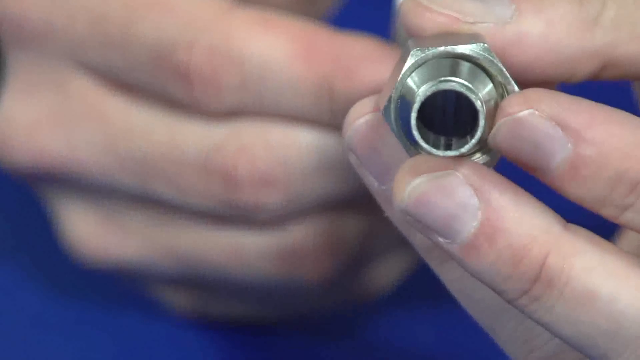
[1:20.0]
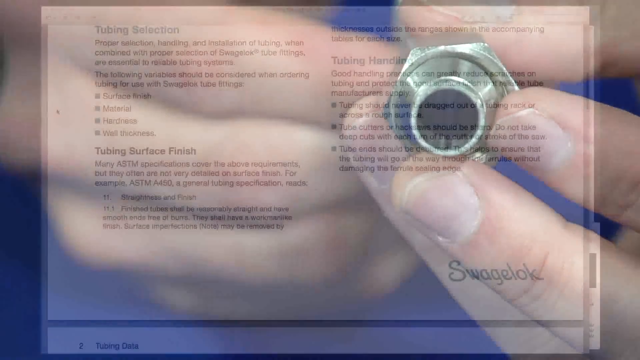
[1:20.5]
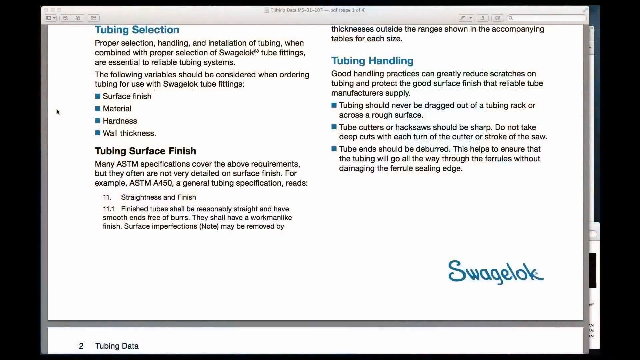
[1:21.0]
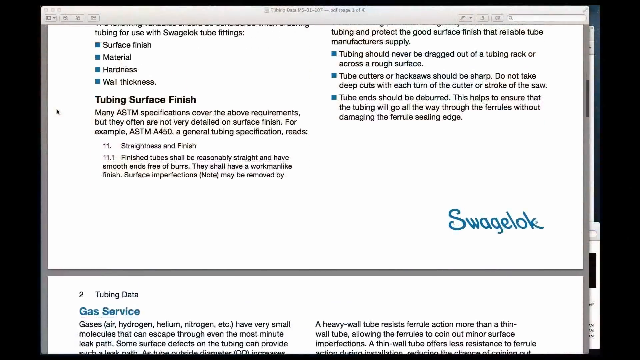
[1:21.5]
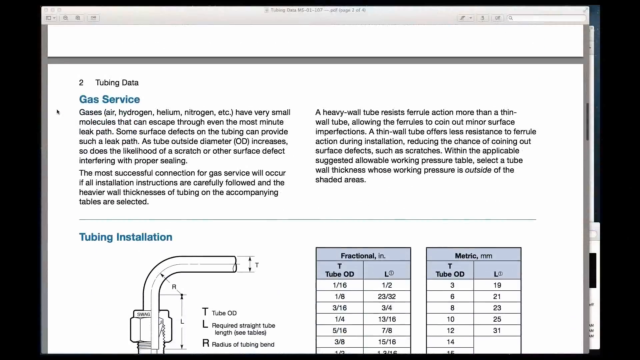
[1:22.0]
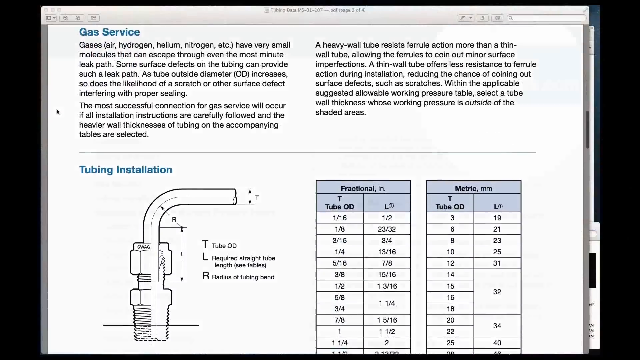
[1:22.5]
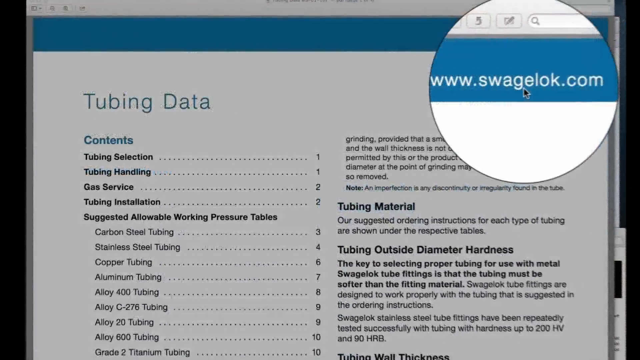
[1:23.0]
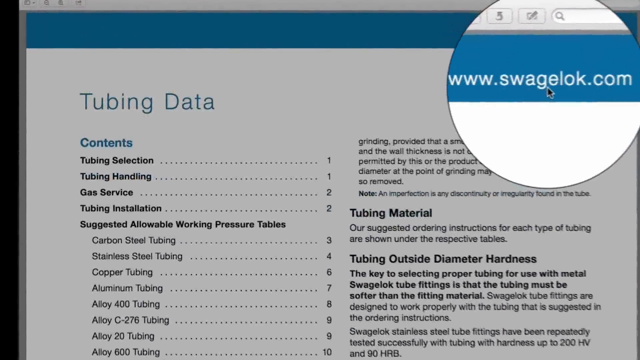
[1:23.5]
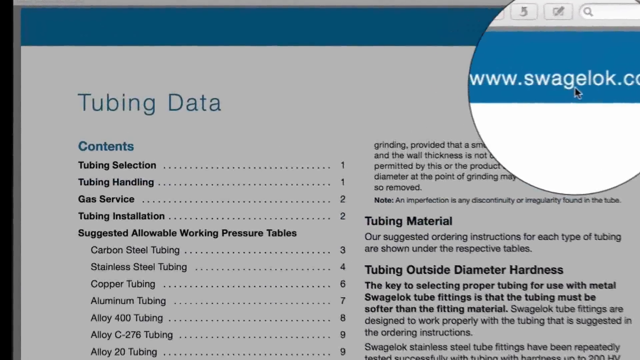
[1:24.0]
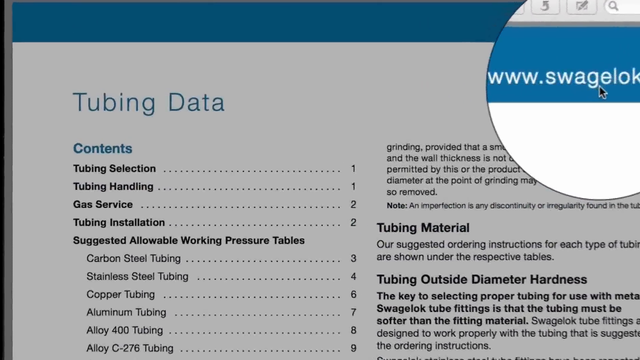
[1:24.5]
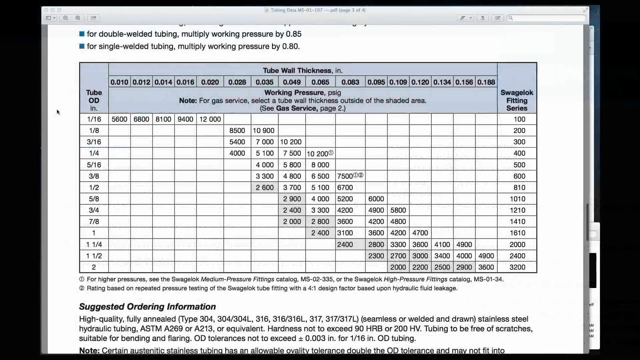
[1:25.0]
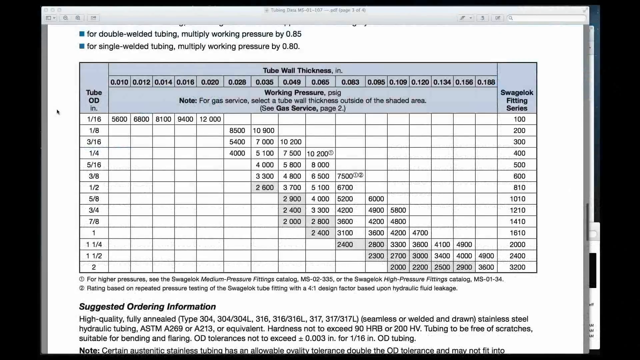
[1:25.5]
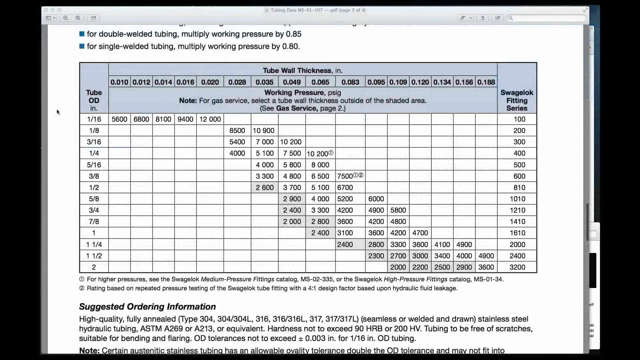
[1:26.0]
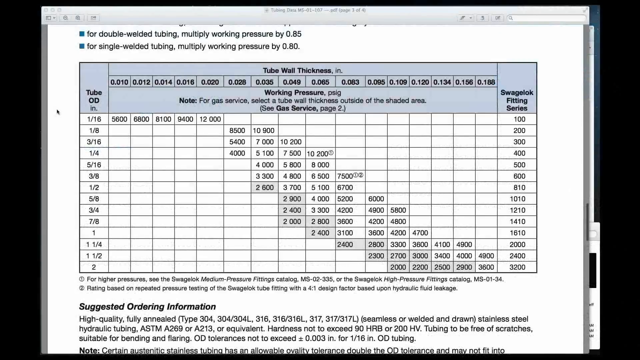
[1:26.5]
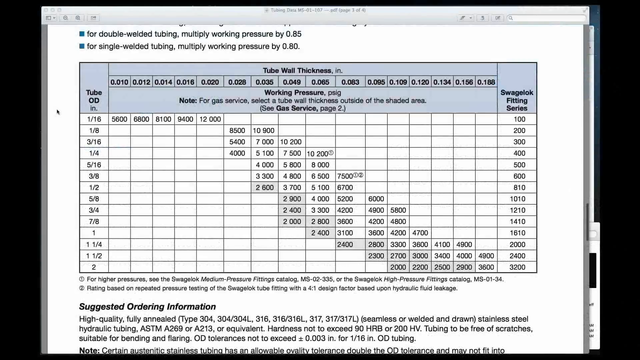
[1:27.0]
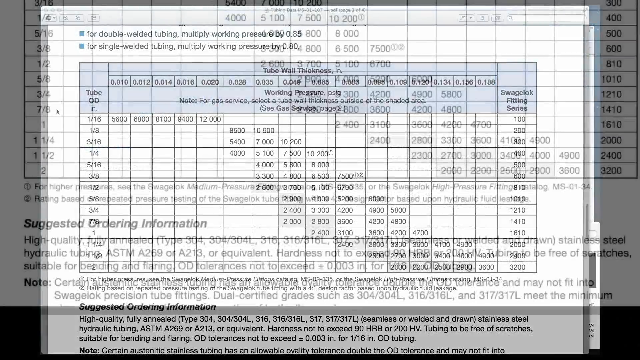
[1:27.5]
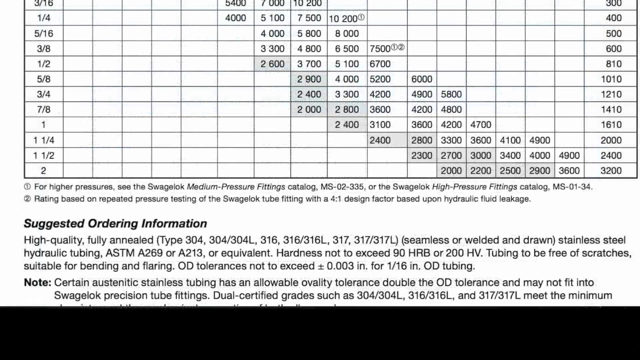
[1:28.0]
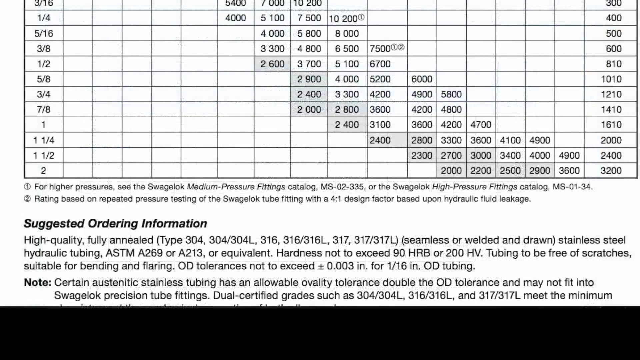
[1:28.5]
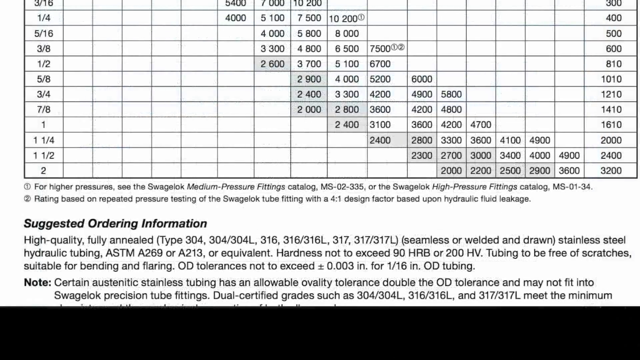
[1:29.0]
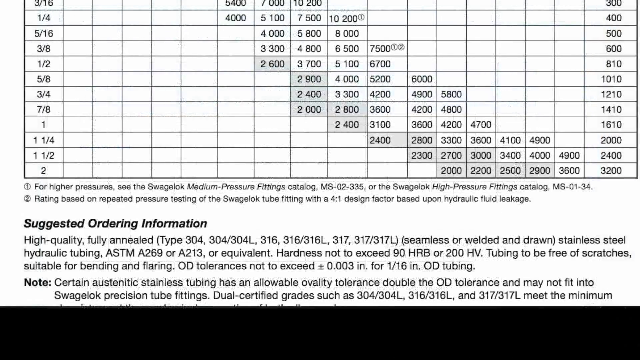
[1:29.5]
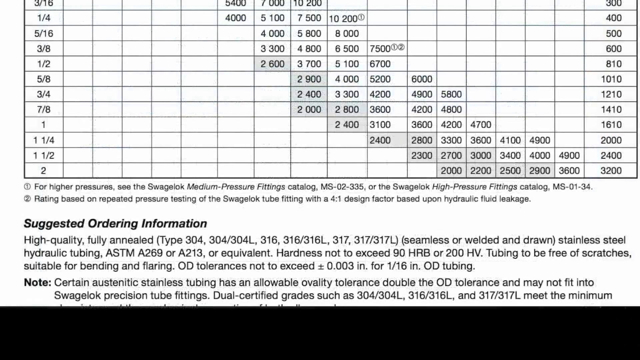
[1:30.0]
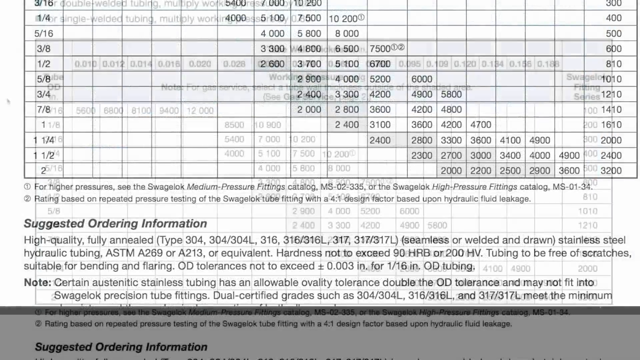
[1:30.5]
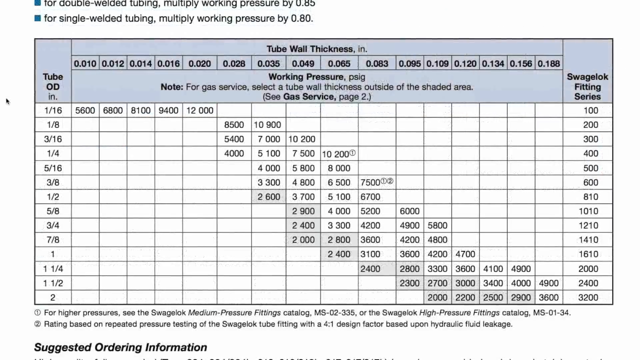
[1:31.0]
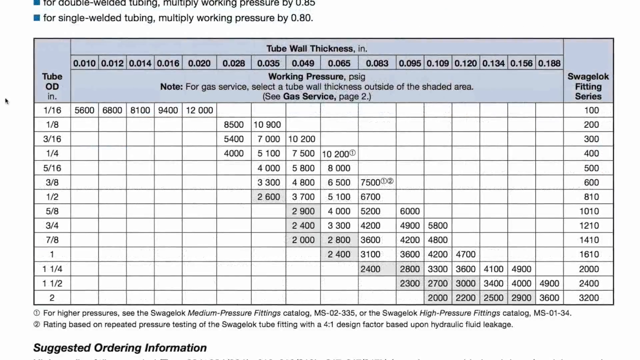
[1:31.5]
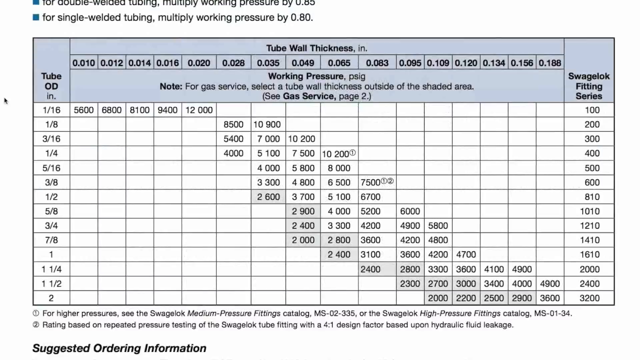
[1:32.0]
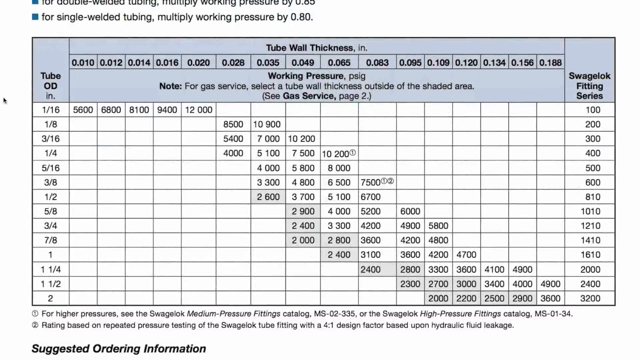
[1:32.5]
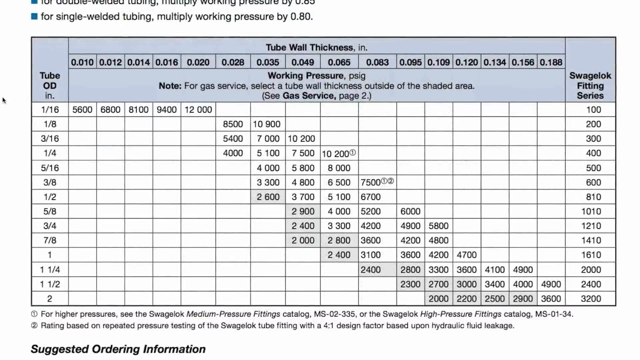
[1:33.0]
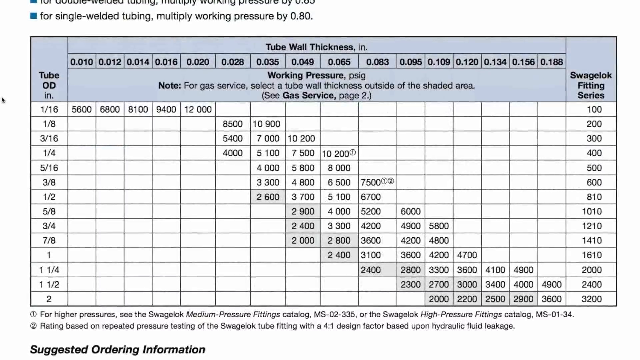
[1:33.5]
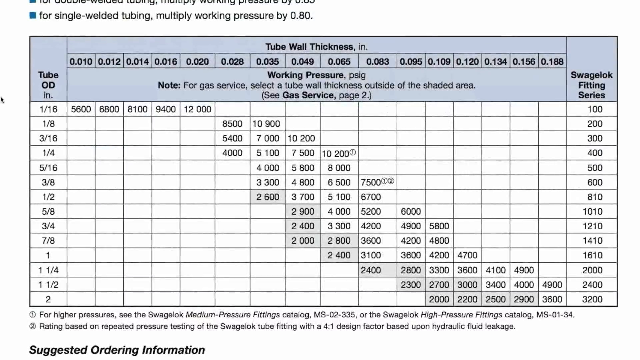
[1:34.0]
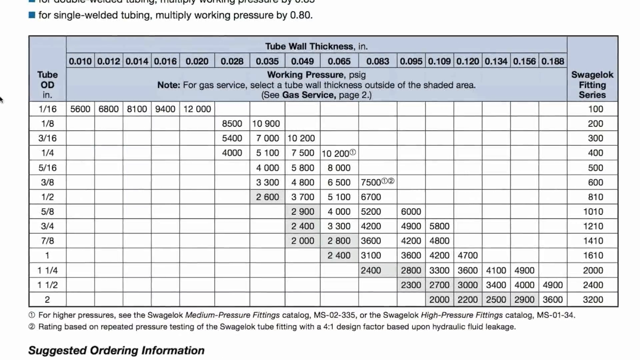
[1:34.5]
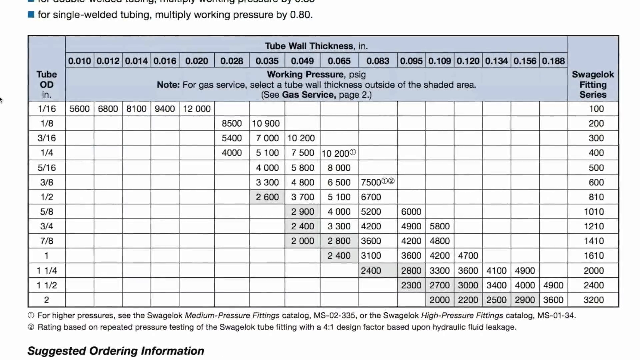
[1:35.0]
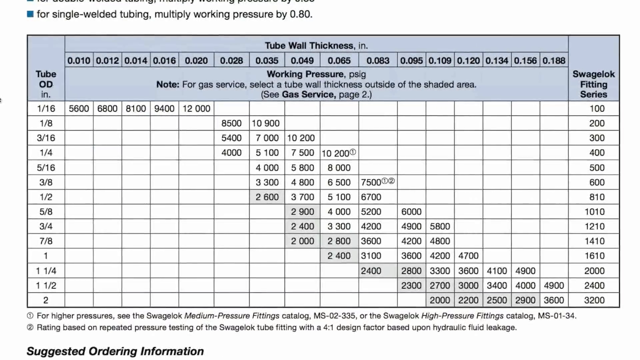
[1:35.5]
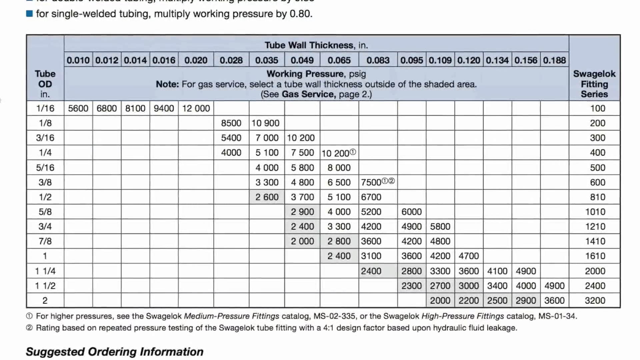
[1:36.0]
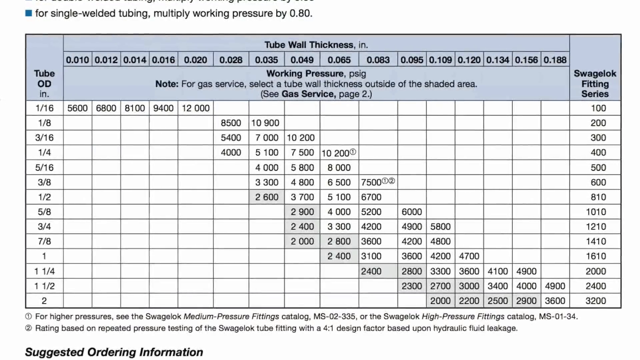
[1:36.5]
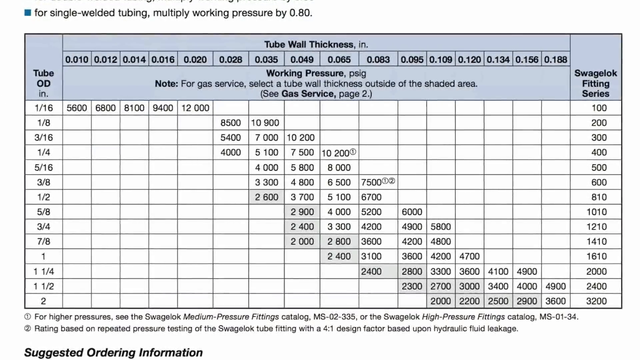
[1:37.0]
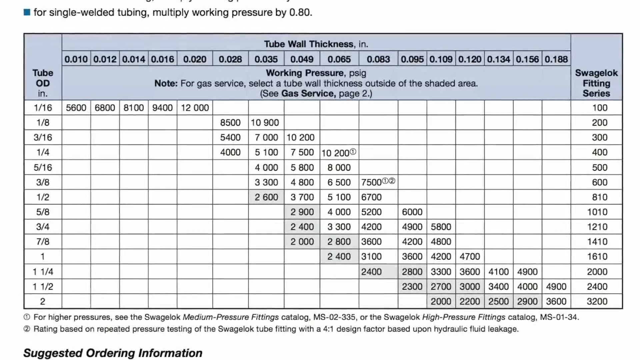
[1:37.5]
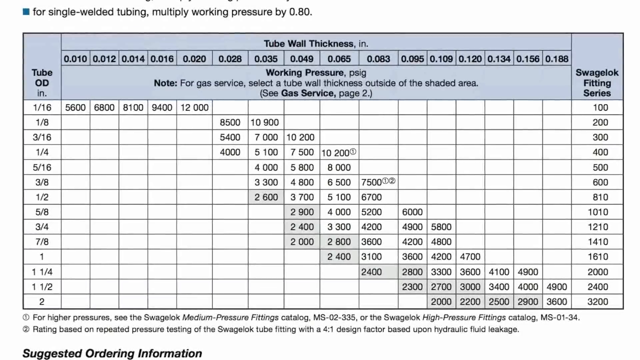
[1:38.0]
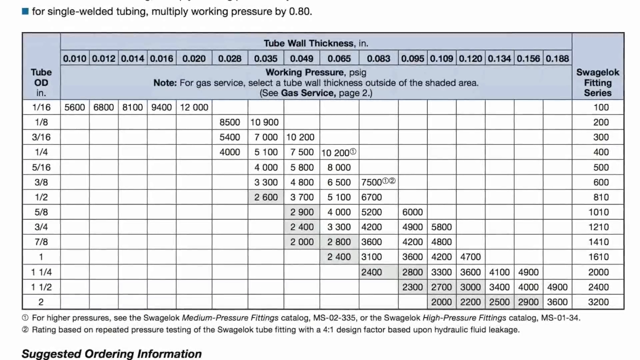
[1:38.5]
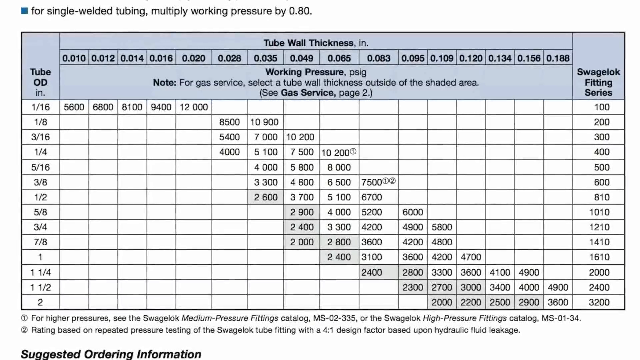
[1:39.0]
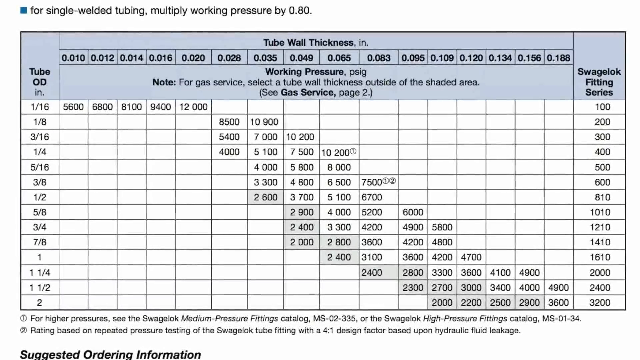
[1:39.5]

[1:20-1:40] The man holds pipes or pieces of tubing in his hand. The video goes back to the text page that began with an index, and the pages are scrolled through, showing different options, including a page whose header includes "gas service"; there appear to be charts on it as well. The view zooms in on the area of the index page that says "tubing data". A chart then appears that seems to give the pressure of the different fittings: a column for tubing outside diameter runs along the side, columns for tube wall thickness run along the top, and a column on the far right holds individual numbers for Swagelok fitting series. These appear to intersect and line up to show the pressures the different pieces of tubing can withstand.